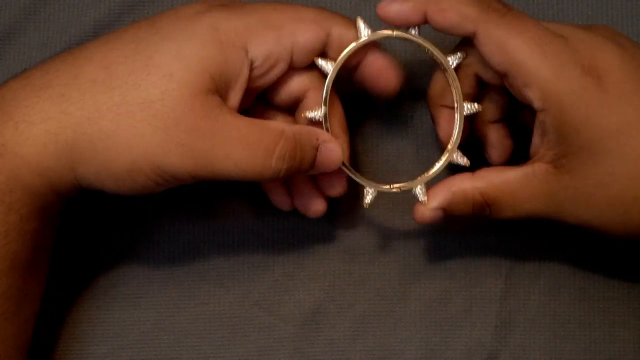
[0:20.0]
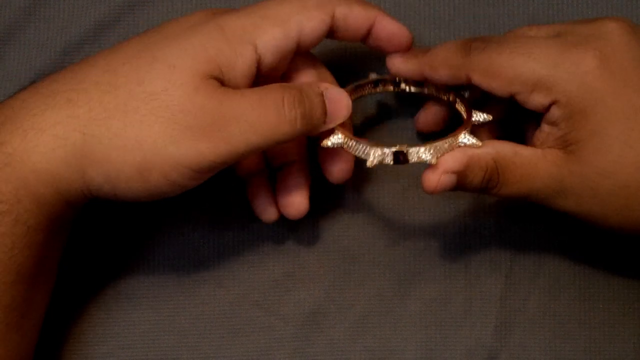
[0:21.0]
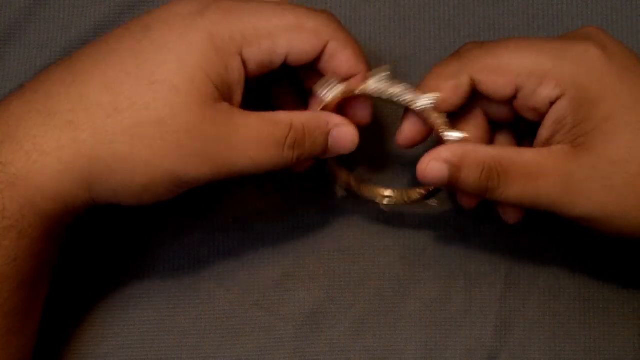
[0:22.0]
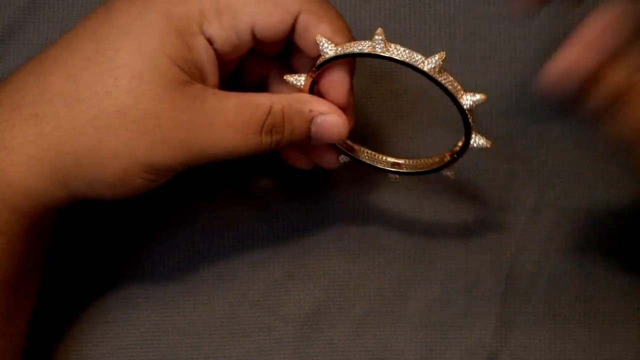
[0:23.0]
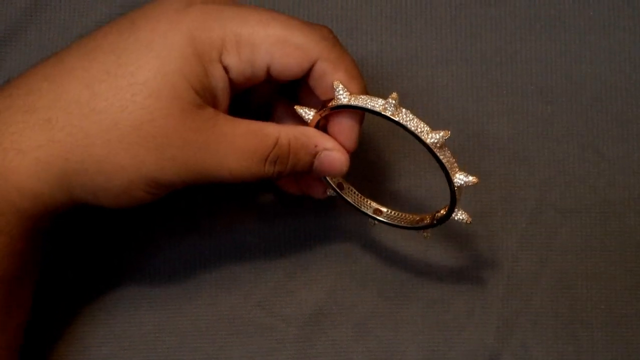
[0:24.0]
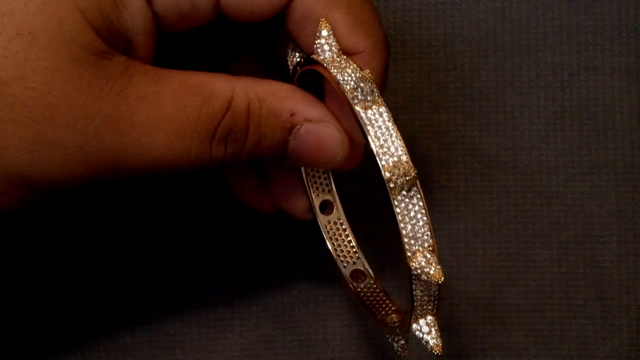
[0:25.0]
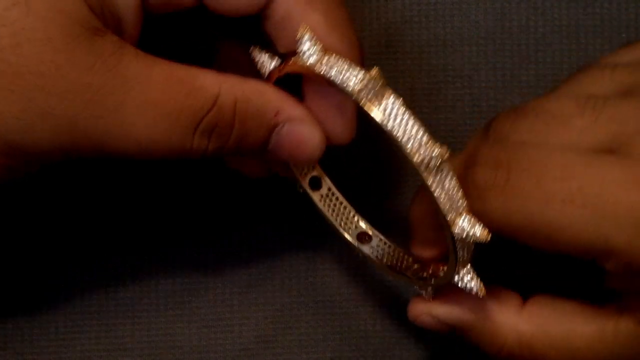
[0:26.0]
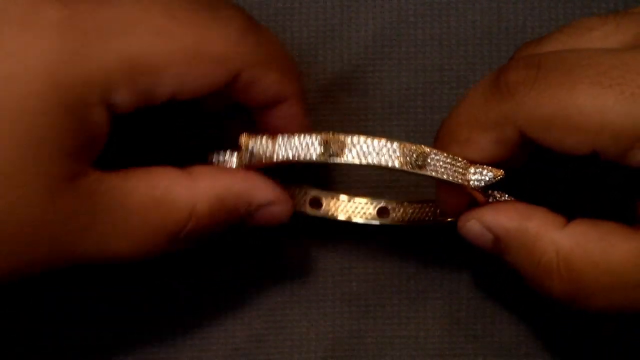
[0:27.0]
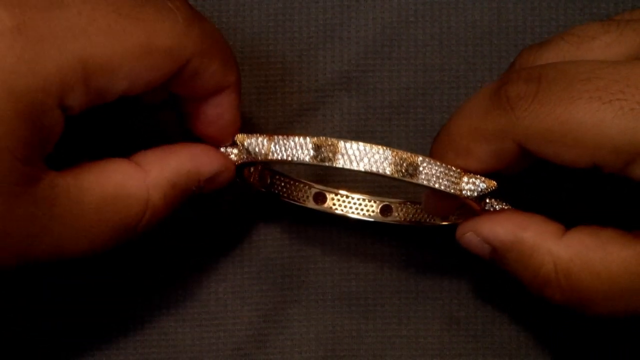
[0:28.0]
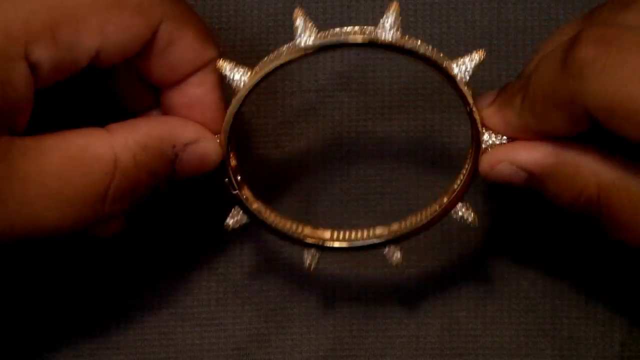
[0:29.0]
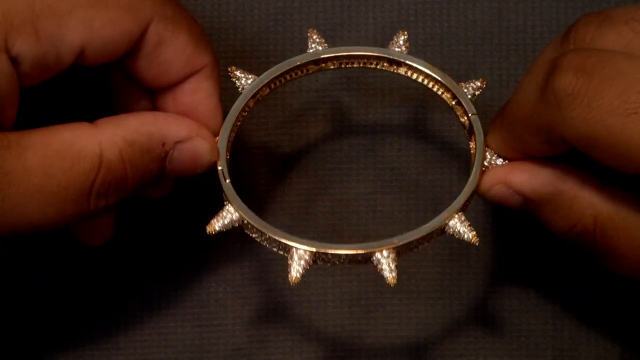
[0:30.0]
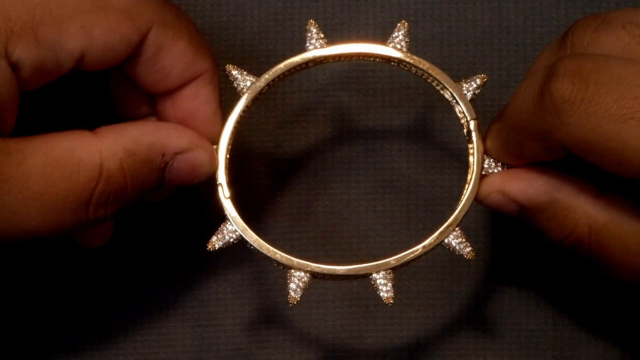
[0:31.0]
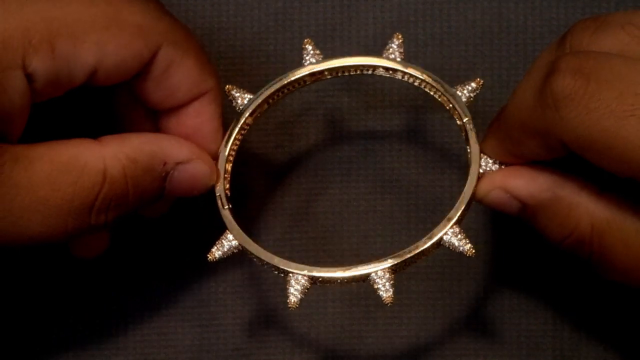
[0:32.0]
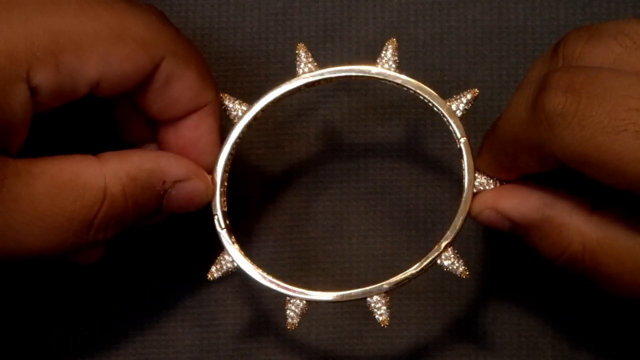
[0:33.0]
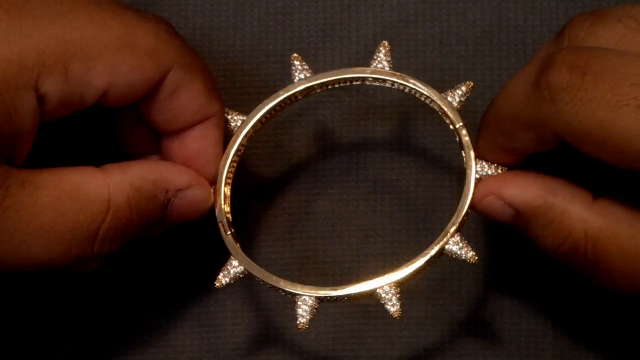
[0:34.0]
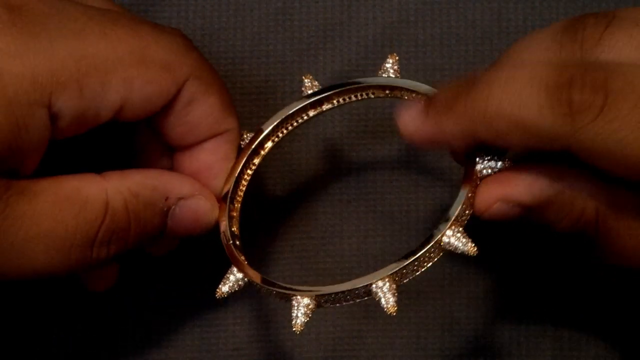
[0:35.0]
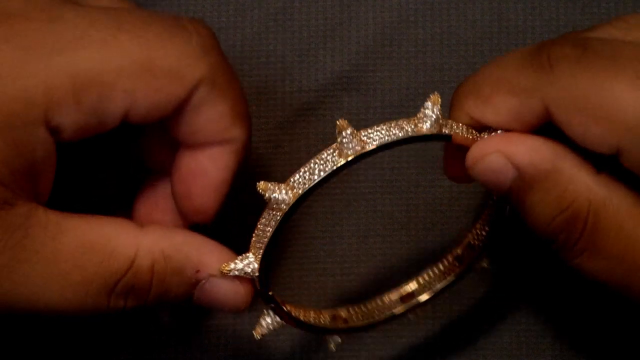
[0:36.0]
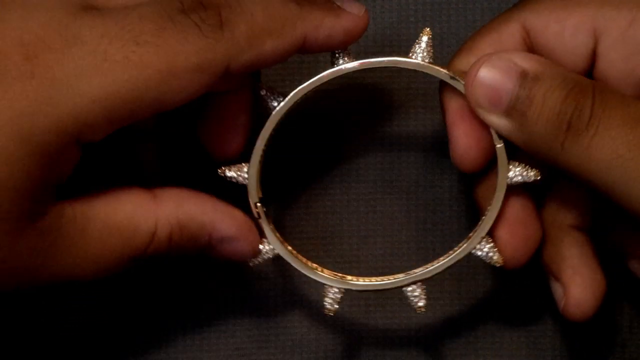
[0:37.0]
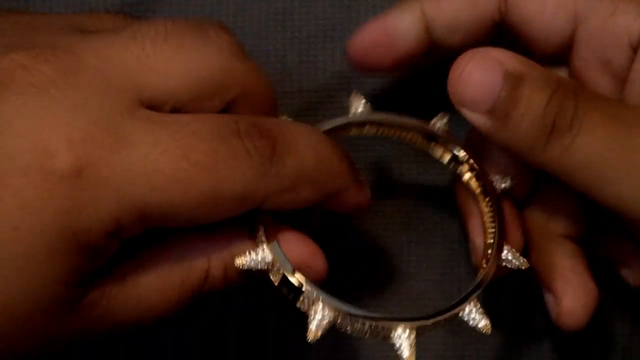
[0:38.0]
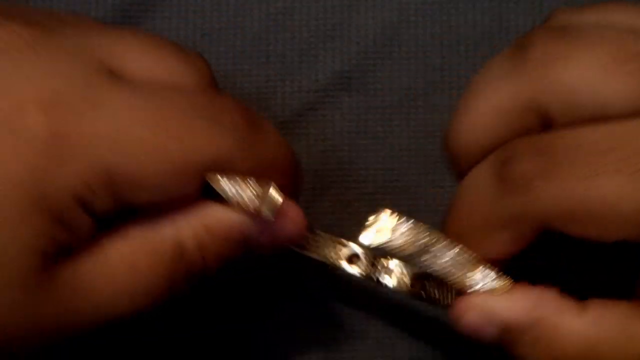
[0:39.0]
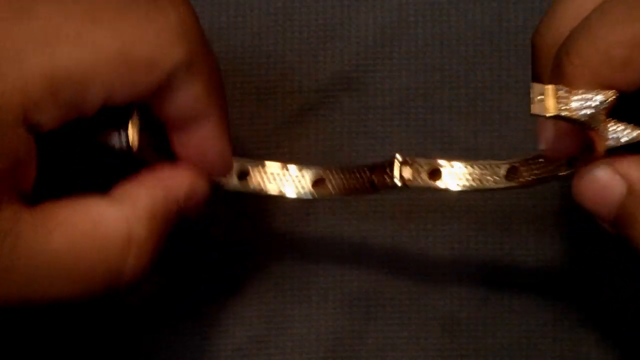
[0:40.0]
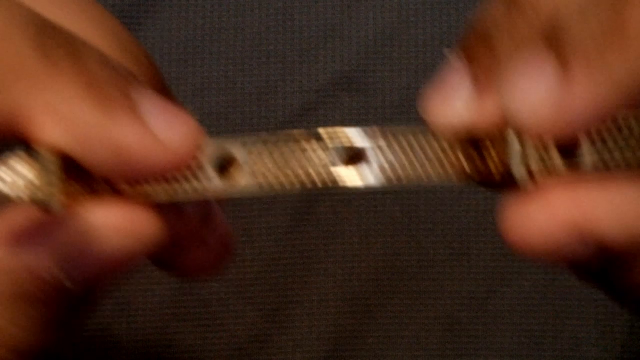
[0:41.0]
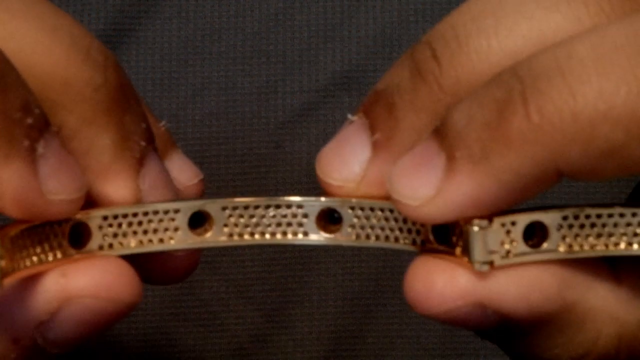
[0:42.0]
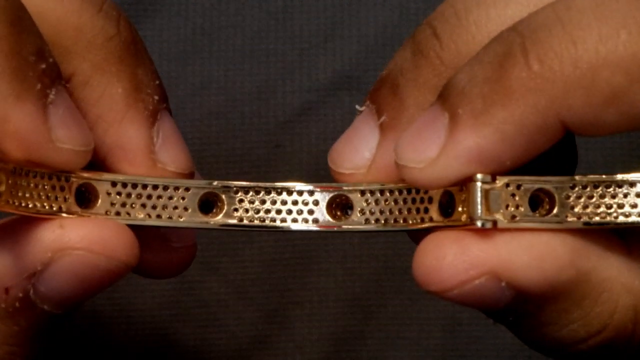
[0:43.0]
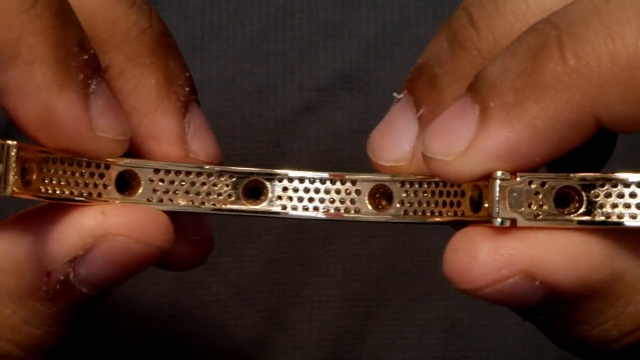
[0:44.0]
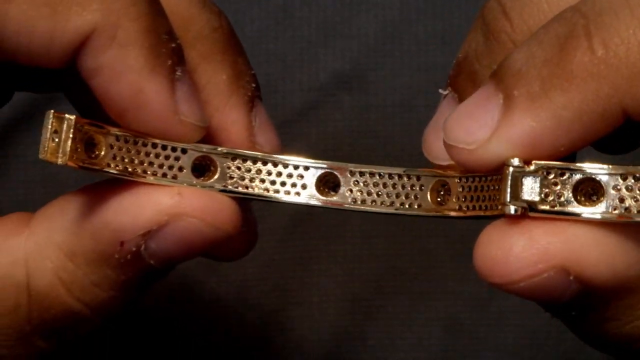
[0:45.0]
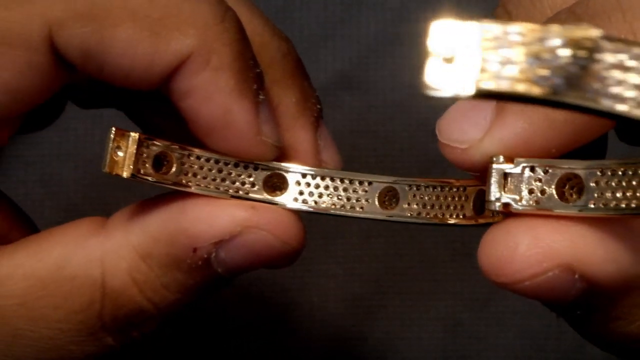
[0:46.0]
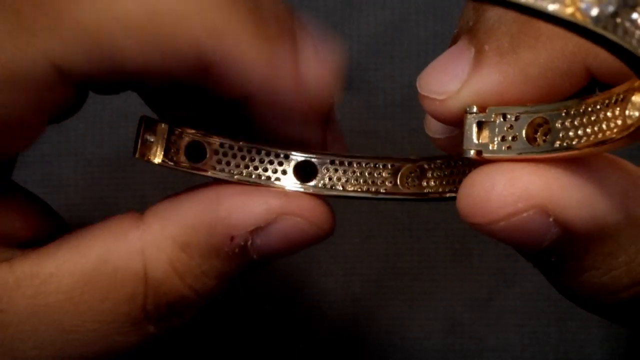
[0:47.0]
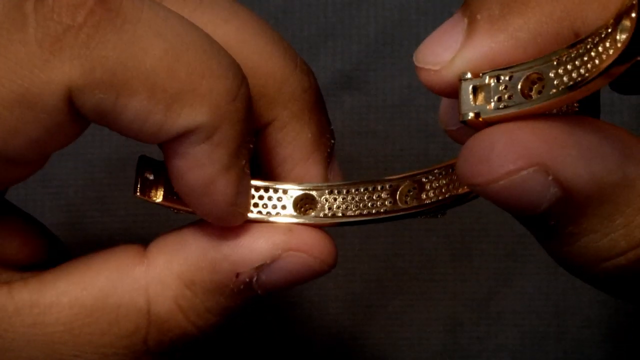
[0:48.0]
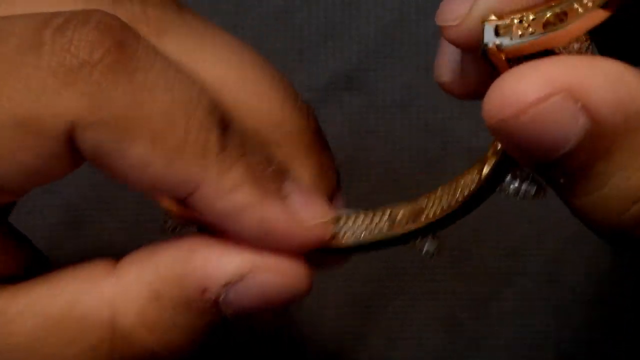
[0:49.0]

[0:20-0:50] The person holds the bangle, which looks like it has diamonds inside. There are some holes inside it, and sharp things come out on the outside. Its color is a little gold, and it is shiny. The person looks at it from every side.